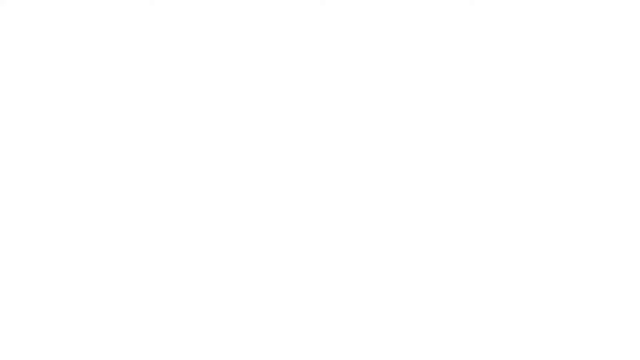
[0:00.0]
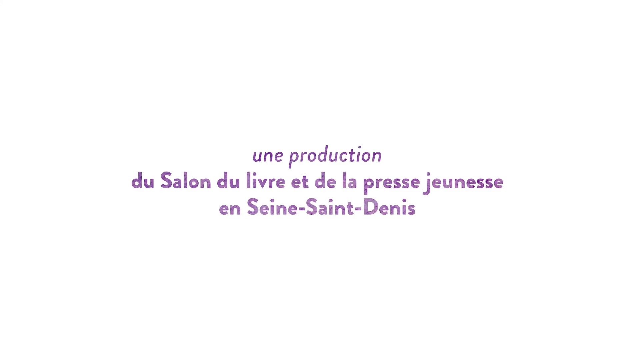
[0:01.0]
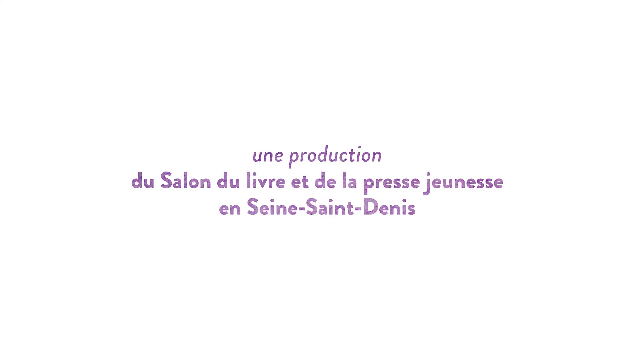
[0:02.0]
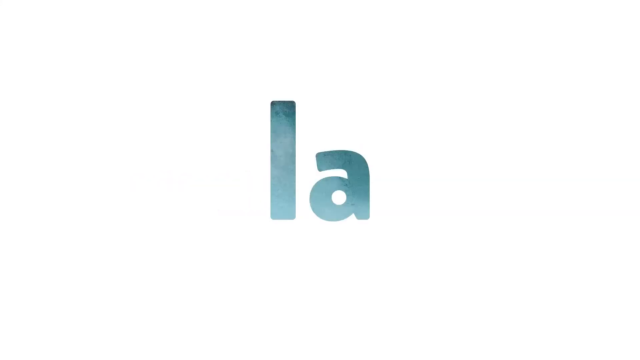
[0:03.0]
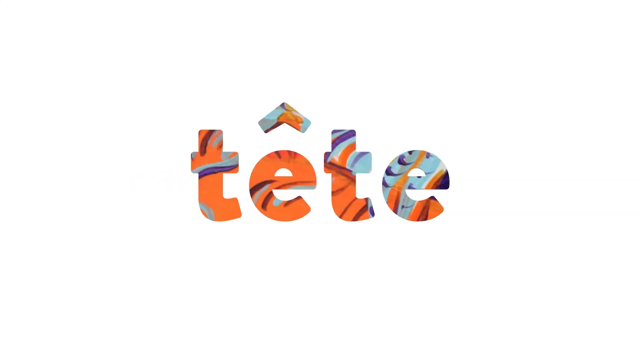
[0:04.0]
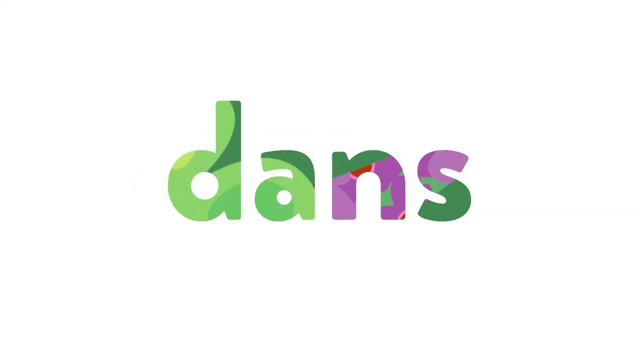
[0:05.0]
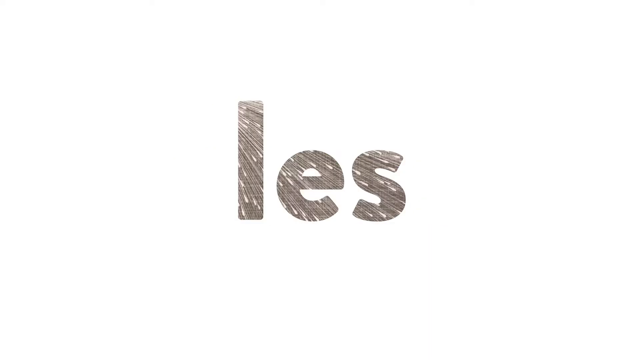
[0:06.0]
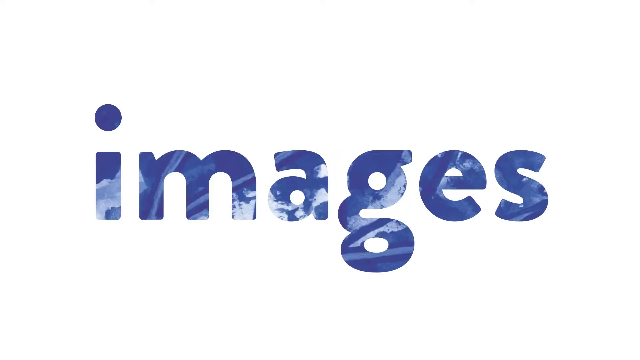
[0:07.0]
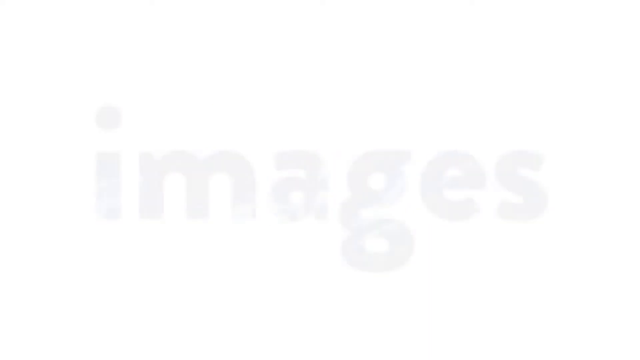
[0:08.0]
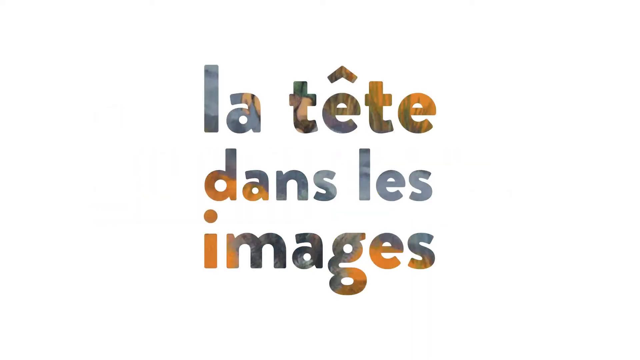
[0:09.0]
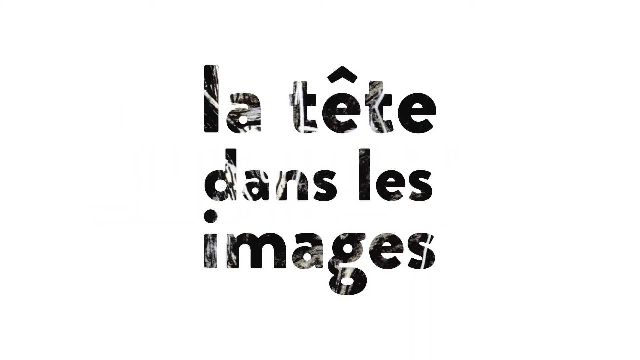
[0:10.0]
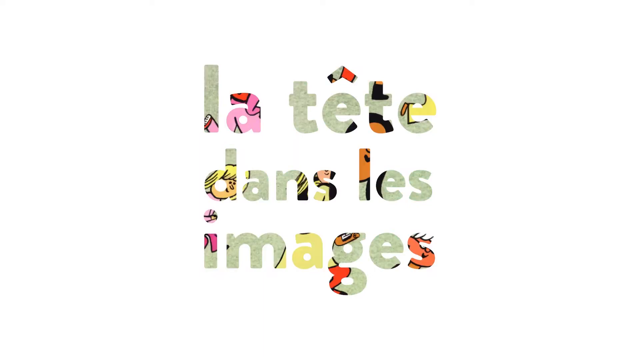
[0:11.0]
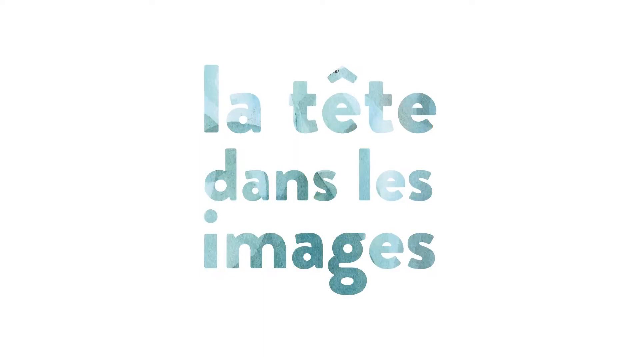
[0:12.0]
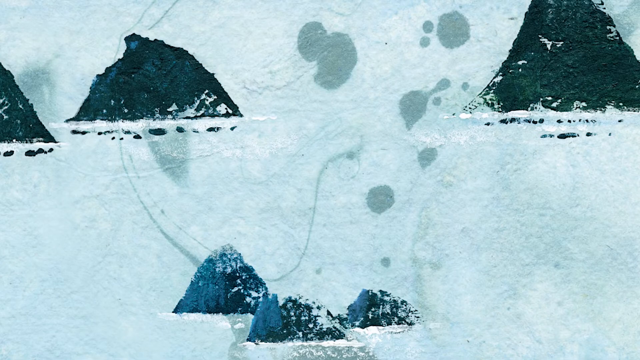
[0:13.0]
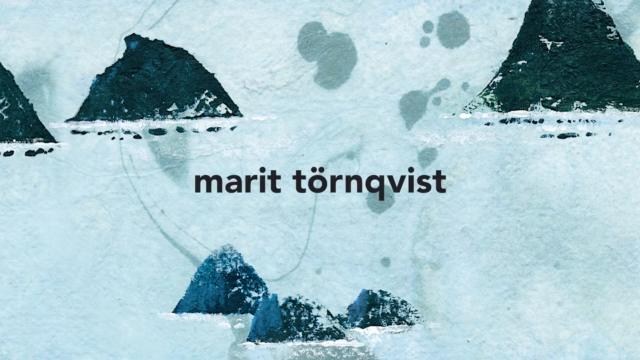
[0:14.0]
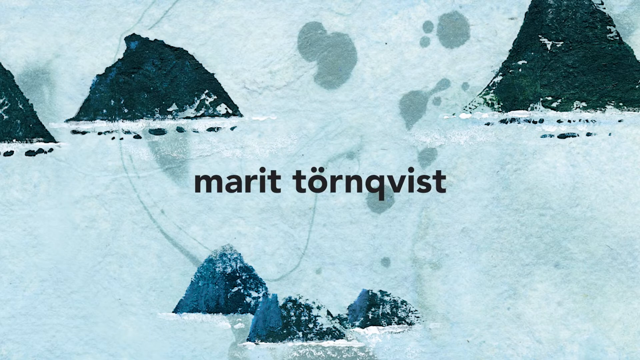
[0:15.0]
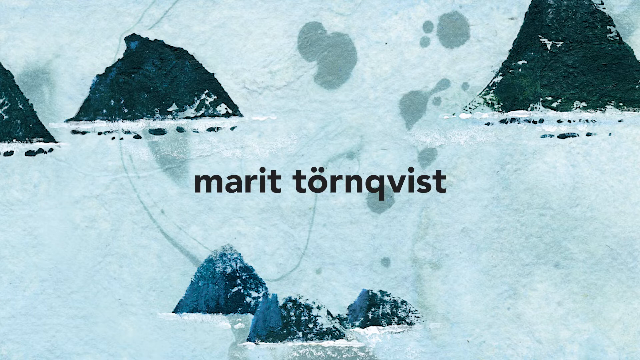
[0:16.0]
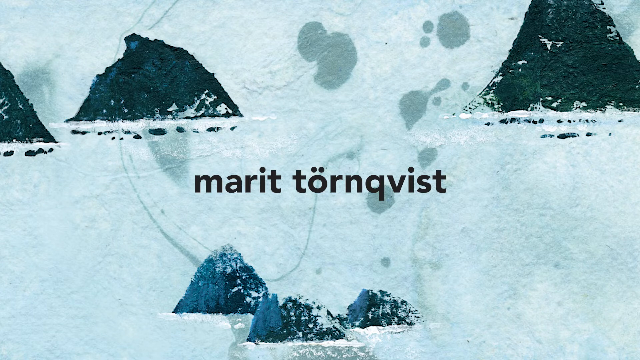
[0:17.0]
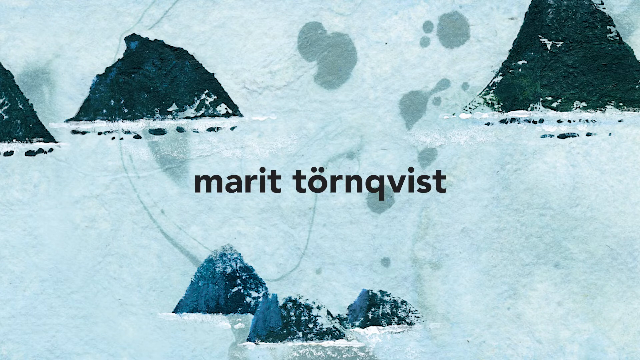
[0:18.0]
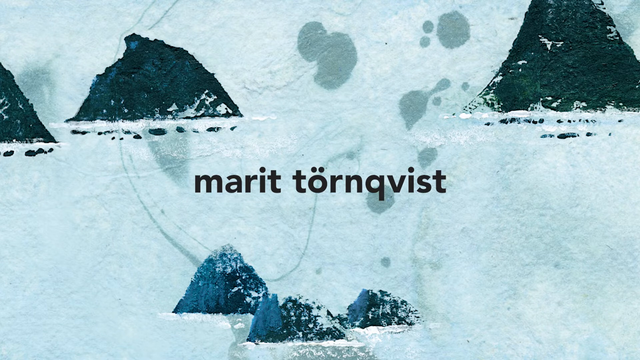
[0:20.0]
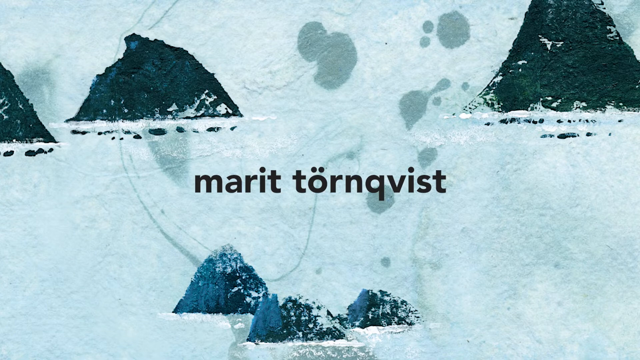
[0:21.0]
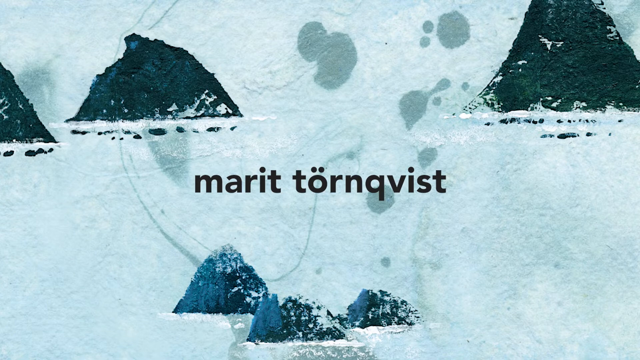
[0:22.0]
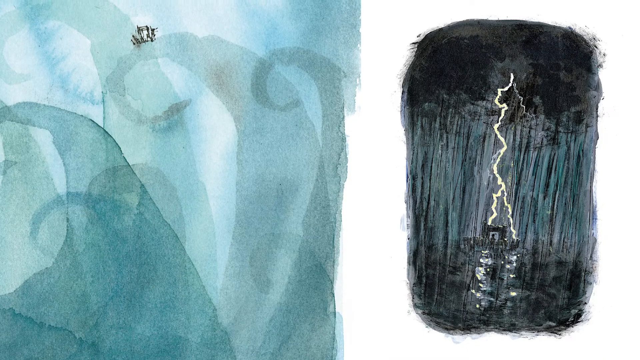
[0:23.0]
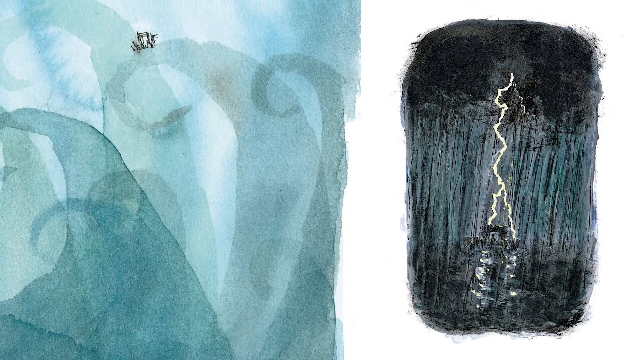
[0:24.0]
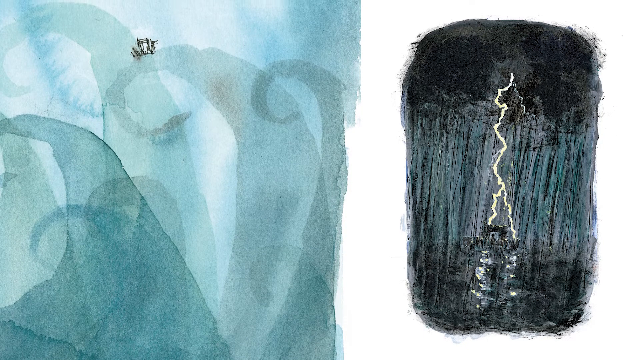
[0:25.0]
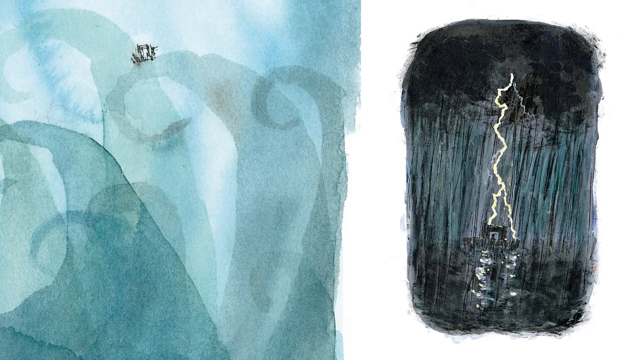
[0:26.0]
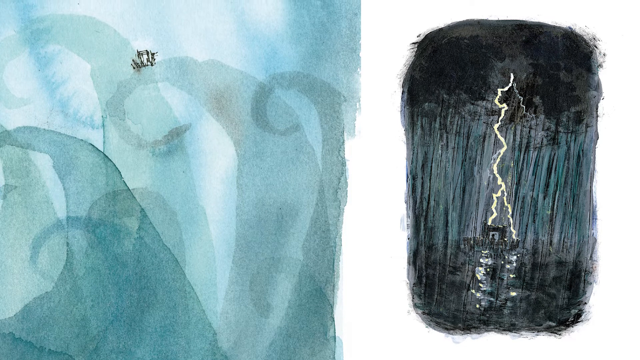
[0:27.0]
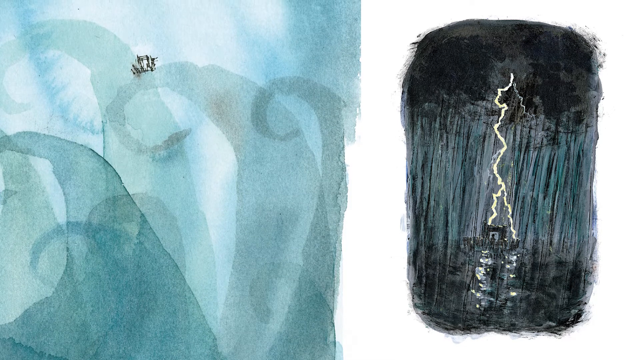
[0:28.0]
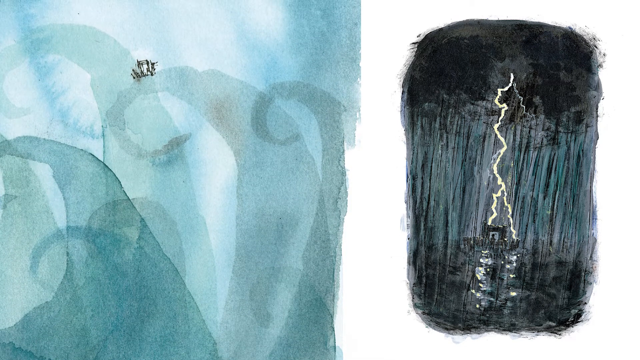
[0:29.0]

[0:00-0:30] The video opens with a caption, apparently in French, that says "a production by Salon du Livret et de la Presse d'UNES in Saint-Denis". Another card follows reading "Dans Less images. La Tête dans less images" in fonts that seem to change colour and pattern. Next comes what looks like a painting on paper of rocks coming out of the ocean, with the text "Marit Tonquist", and it stays like that for a while. Then two scribbly scenes of water appear: the one on the left looks like blue curled waves, and the one on the right is very dark, with a rainstorm and lightning striking something below it. What the lightning hits is unclear, possibly a tractor. The drawing is scribbled and does not seem meant to be precise.